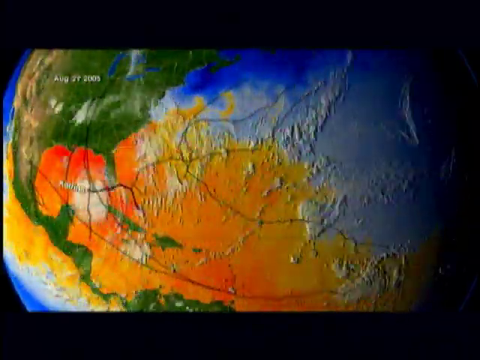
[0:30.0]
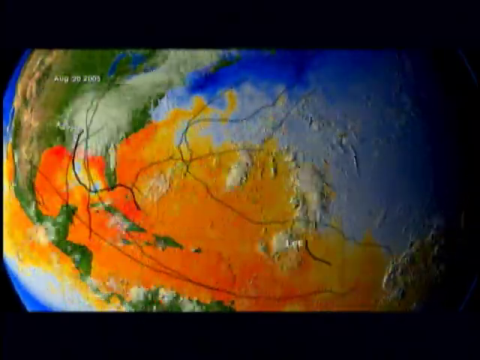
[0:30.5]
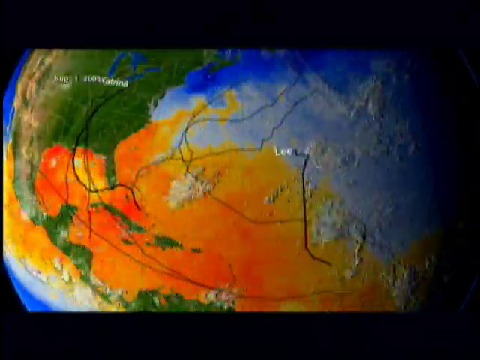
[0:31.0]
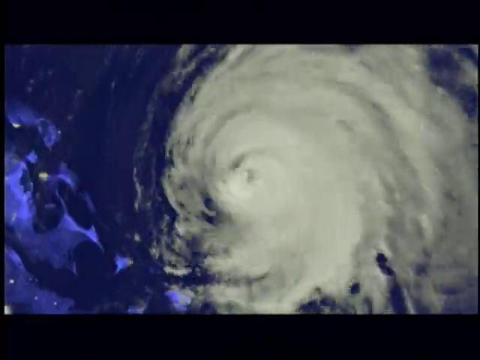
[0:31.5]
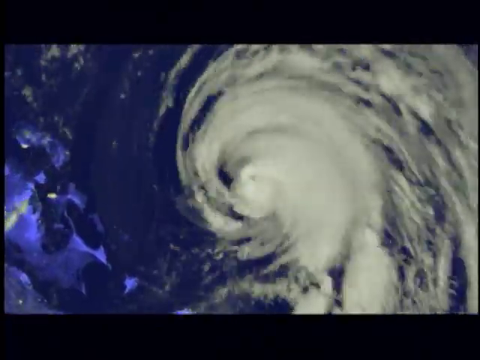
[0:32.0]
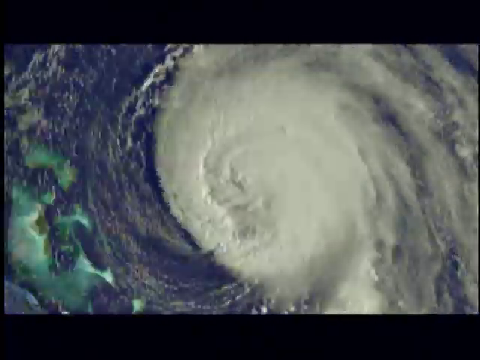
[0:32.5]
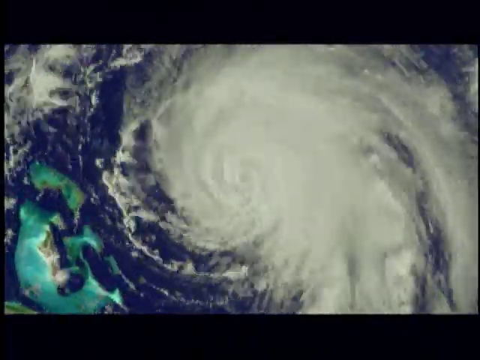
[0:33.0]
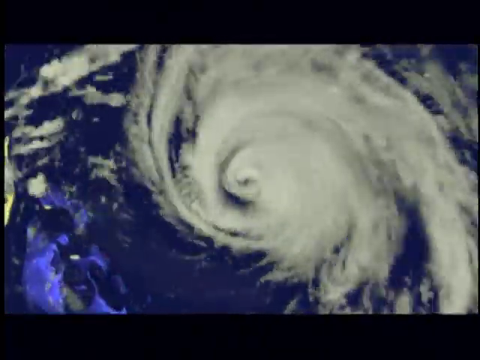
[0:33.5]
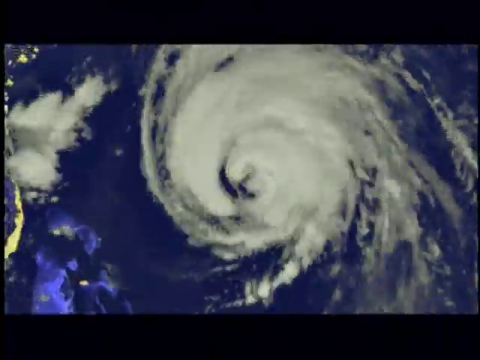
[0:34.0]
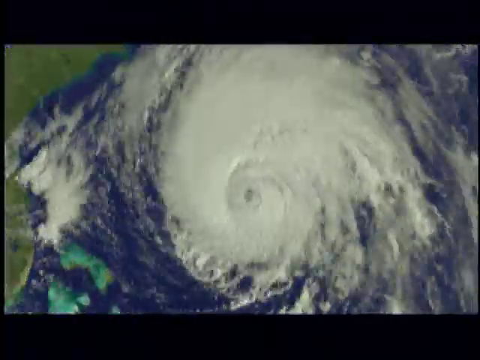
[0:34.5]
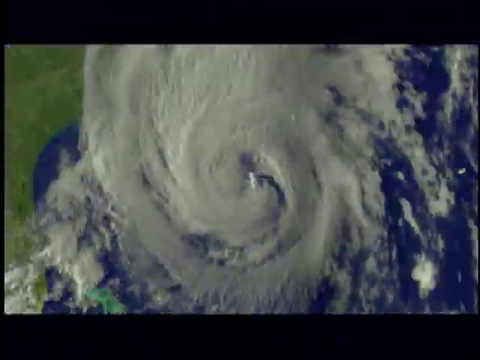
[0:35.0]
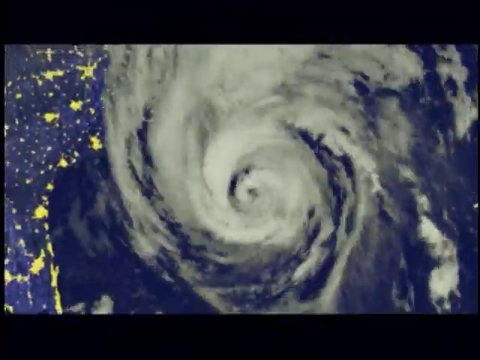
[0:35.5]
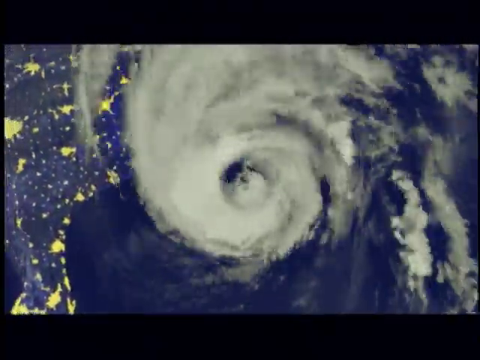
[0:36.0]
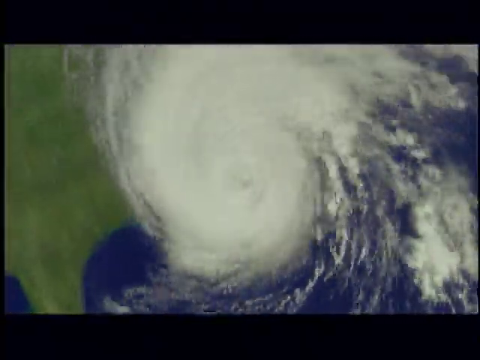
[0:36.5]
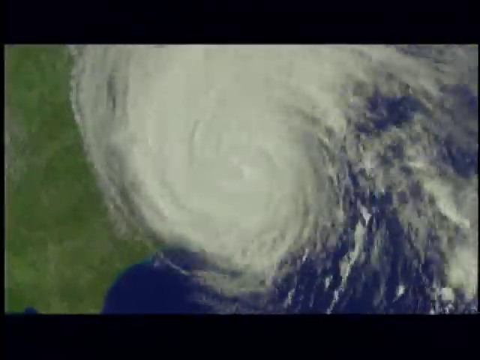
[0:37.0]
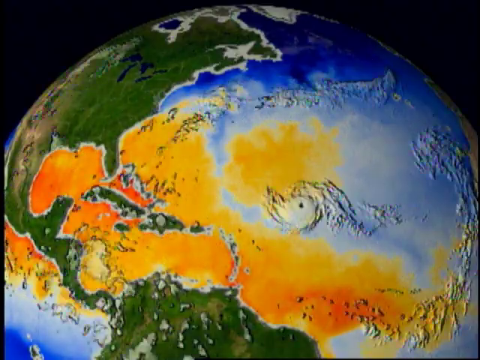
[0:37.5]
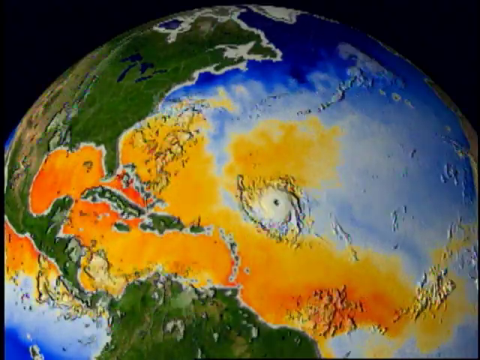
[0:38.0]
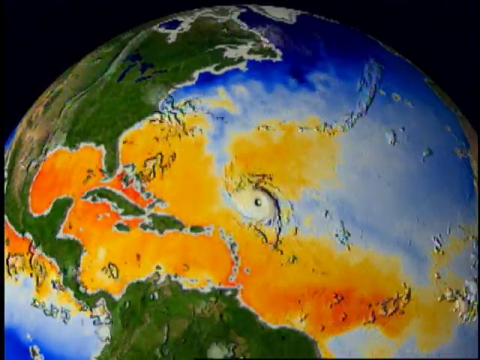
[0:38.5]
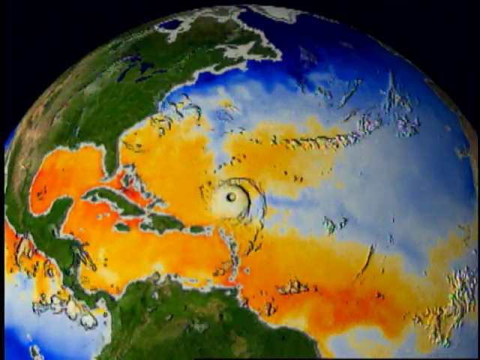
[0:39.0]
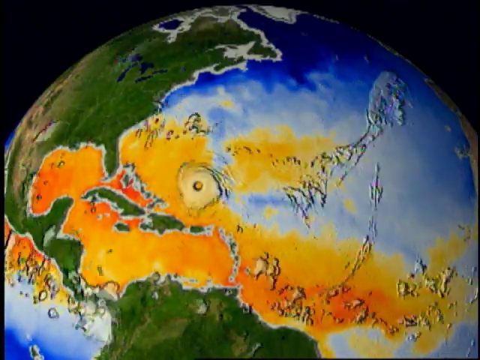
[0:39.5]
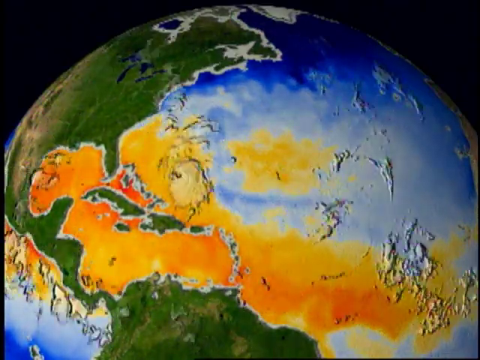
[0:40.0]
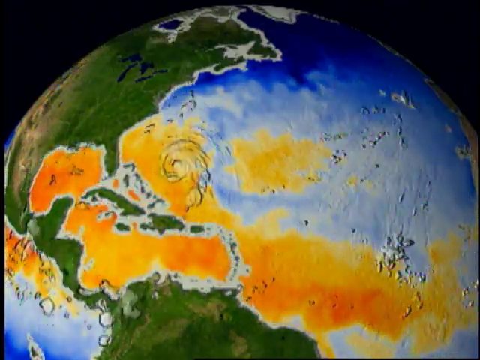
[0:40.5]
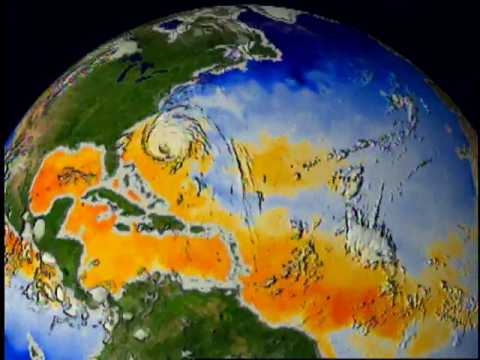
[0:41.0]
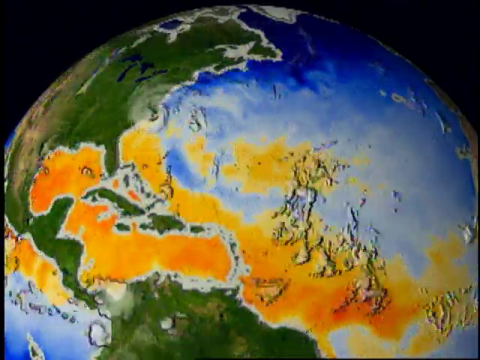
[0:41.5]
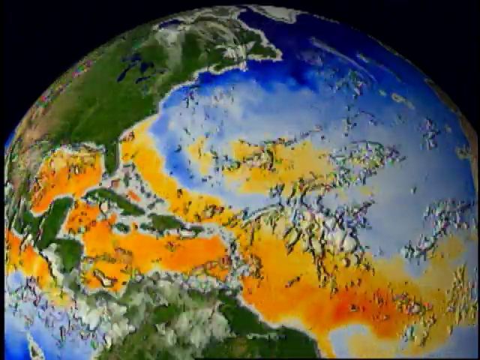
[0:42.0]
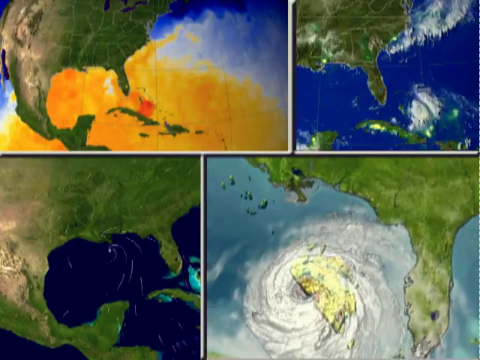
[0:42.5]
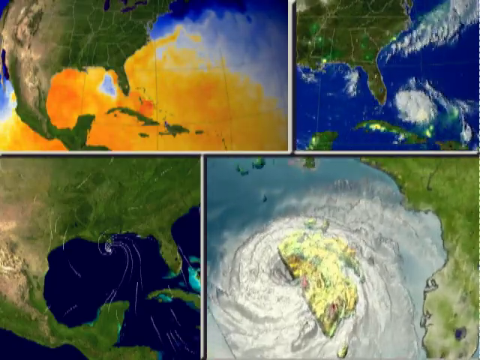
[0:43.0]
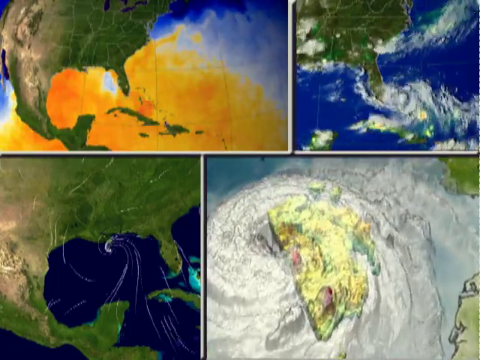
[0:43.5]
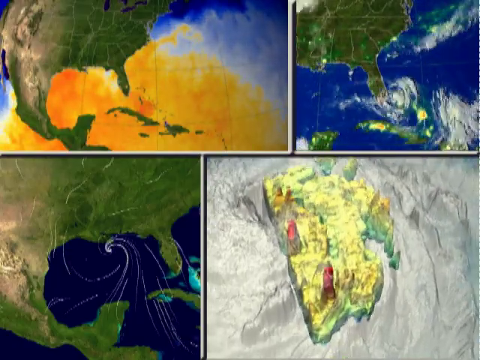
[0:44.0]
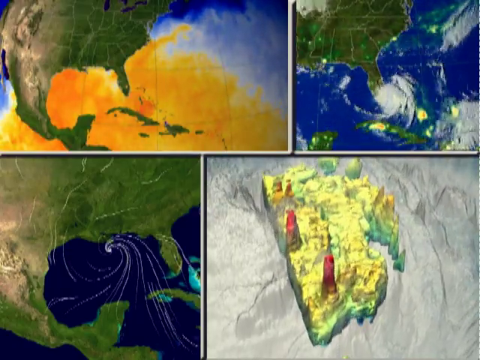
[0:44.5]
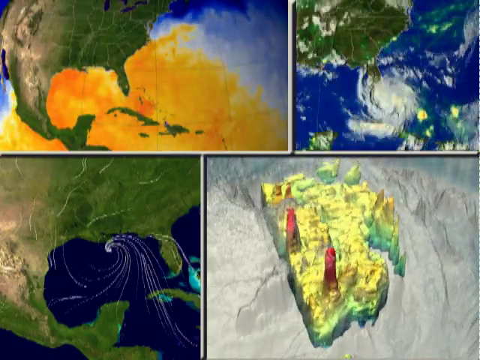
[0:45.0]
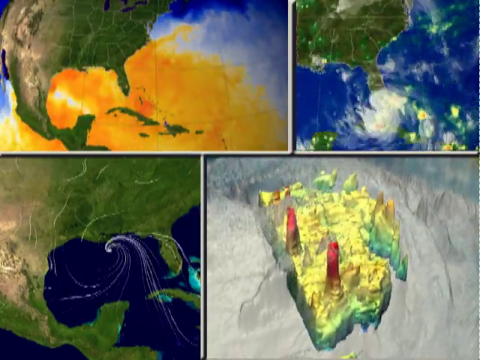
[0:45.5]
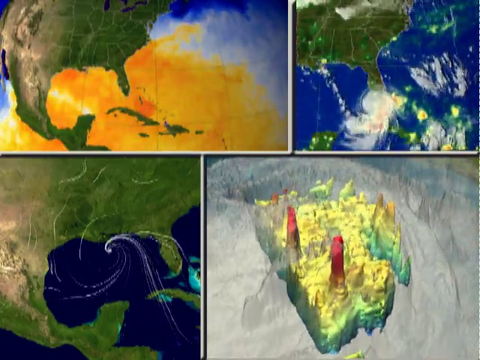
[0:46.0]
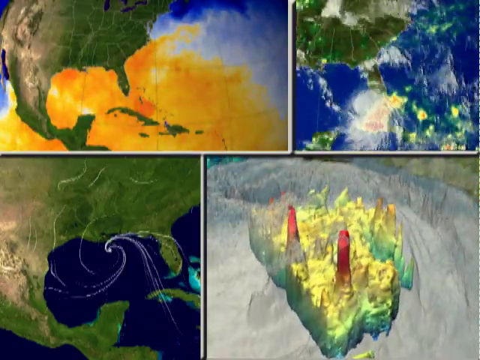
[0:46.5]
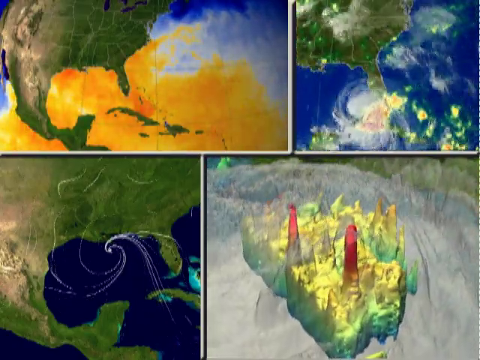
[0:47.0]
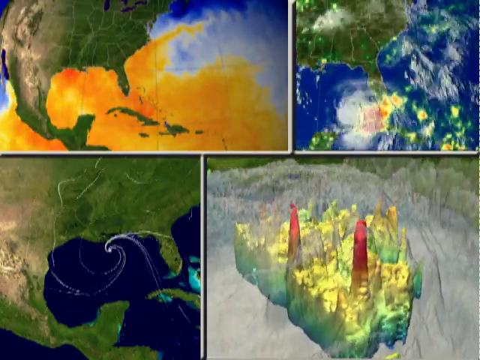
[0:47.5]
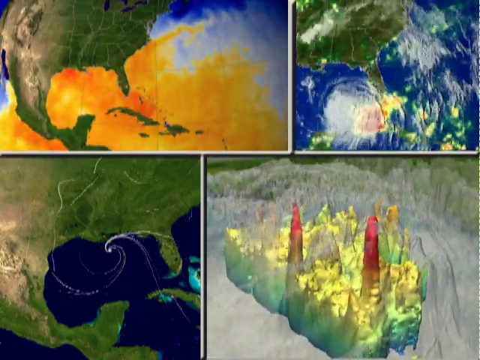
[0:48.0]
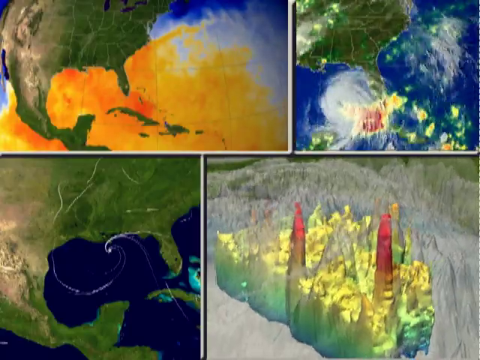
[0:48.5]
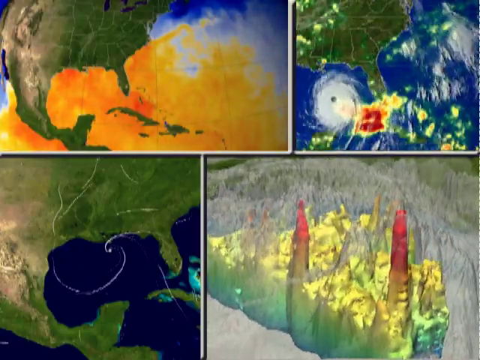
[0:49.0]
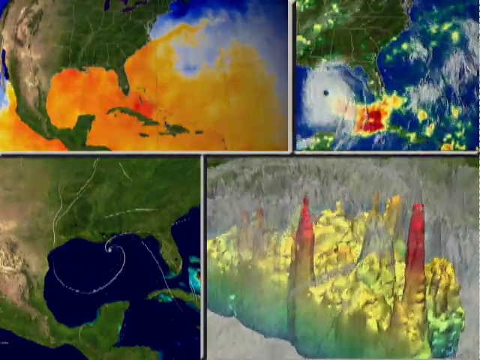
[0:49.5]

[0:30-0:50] A 3D-rendered image of the Earth looks like a globe. North America is on the top left of the screen, Central America on the left middle, and the top of South America toward the bottom in the middle. Over the Atlantic Ocean are what look like some clouds, and warm waters, depicted in orange and yellow, span out about halfway across the Atlantic. The clouds move around, then the clouds of a hurricane appear as seen from space, moving across America. A hurricane then comes across the Atlantic Ocean, across the warm waters. The view switches to four models showing how hurricanes move, two on the top and two on the bottom, each with a picture of America or a piece of America. The top left one has the warm waters, the top right one is just an image of Florida and part of America, the bottom left one shows the Gulf of Mexico, and the bottom right one shows the hurricane to the west of Florida, up in the Gulf of America.